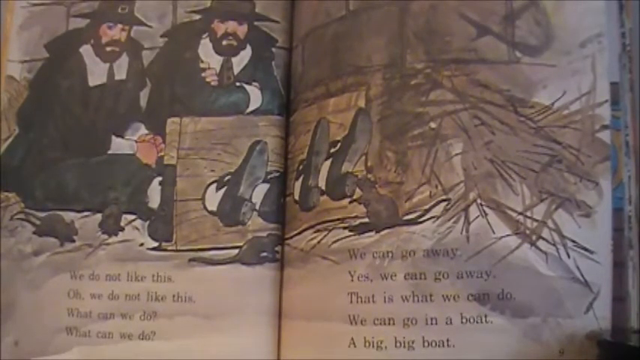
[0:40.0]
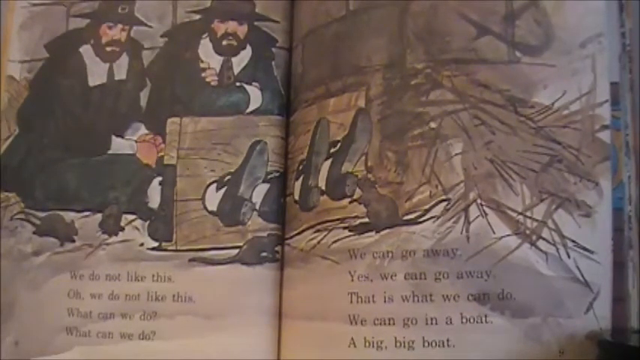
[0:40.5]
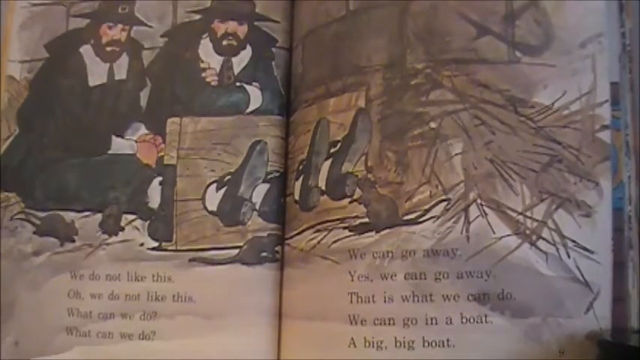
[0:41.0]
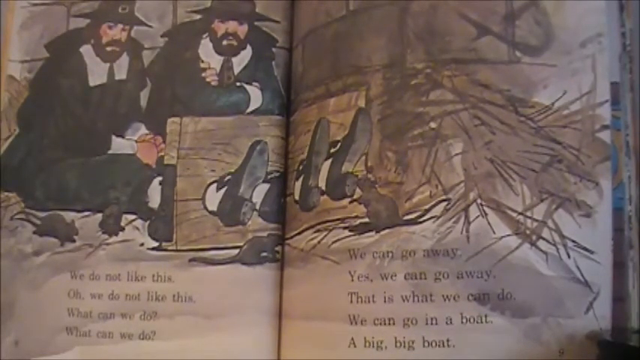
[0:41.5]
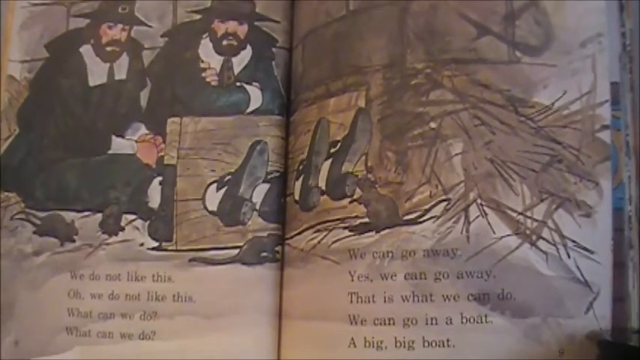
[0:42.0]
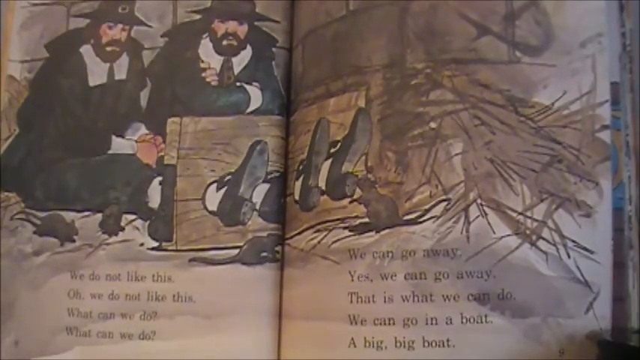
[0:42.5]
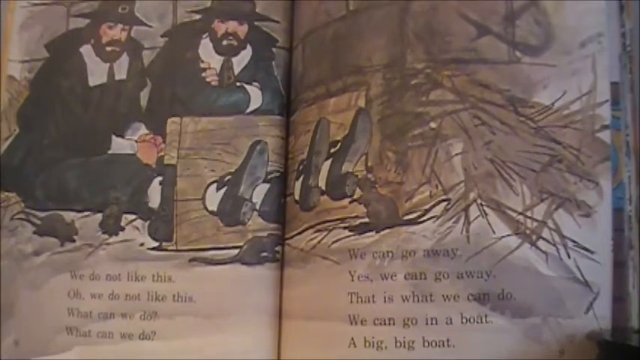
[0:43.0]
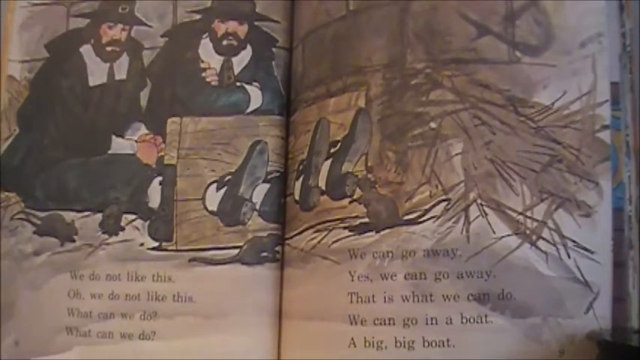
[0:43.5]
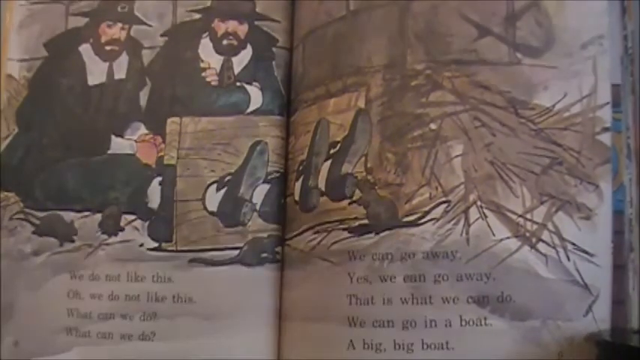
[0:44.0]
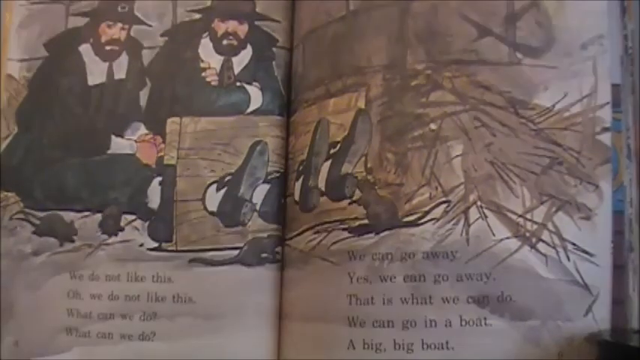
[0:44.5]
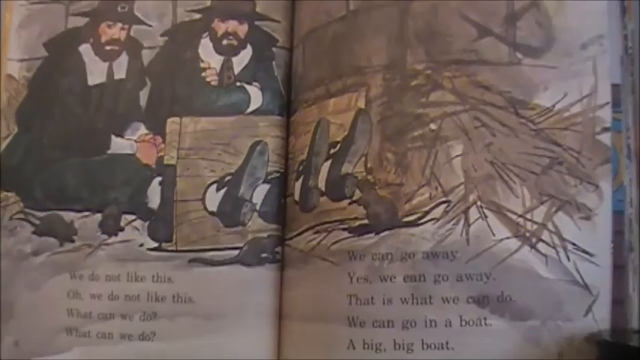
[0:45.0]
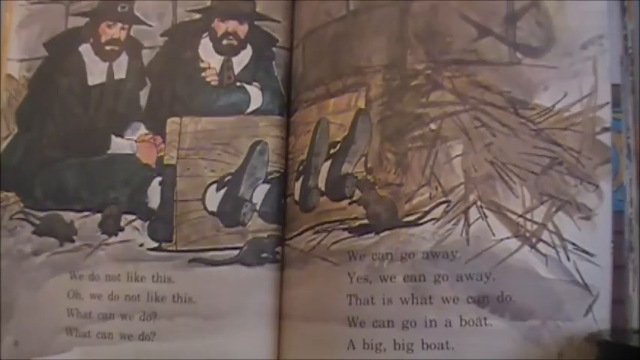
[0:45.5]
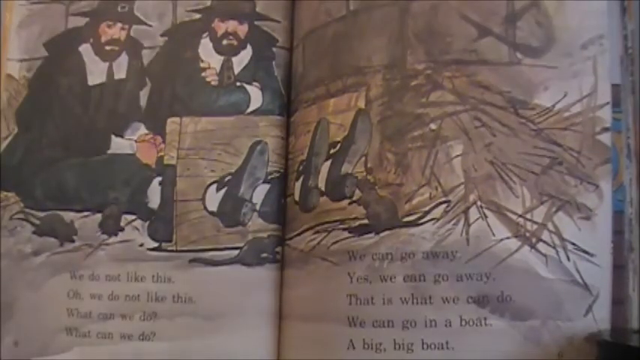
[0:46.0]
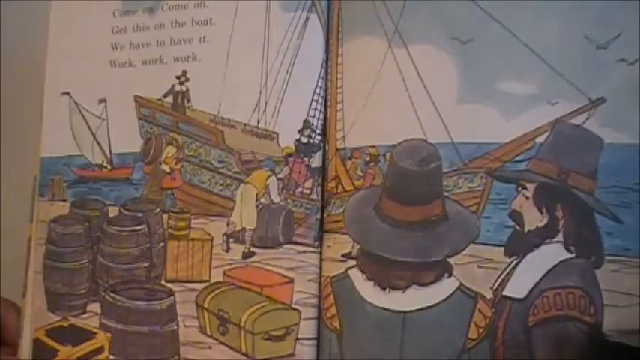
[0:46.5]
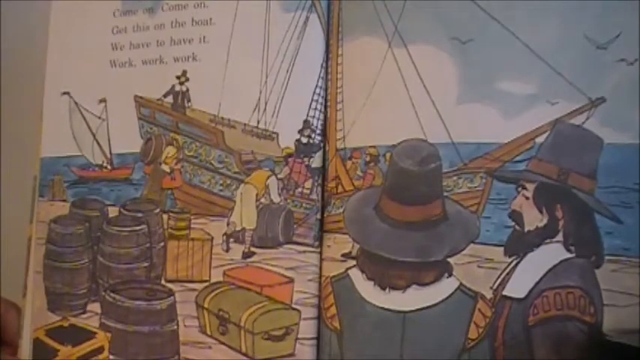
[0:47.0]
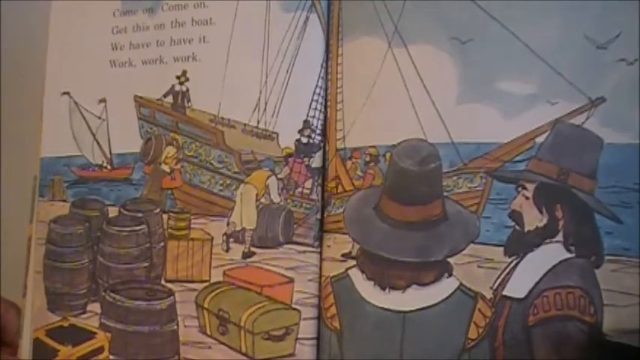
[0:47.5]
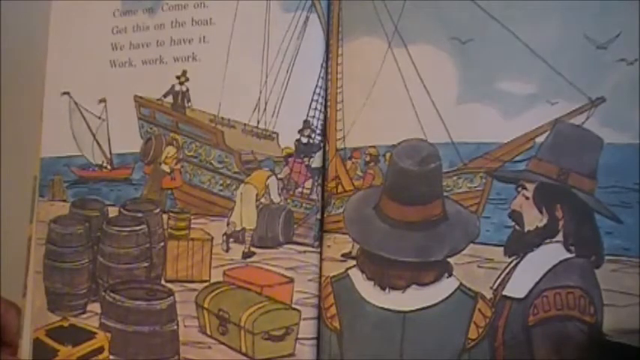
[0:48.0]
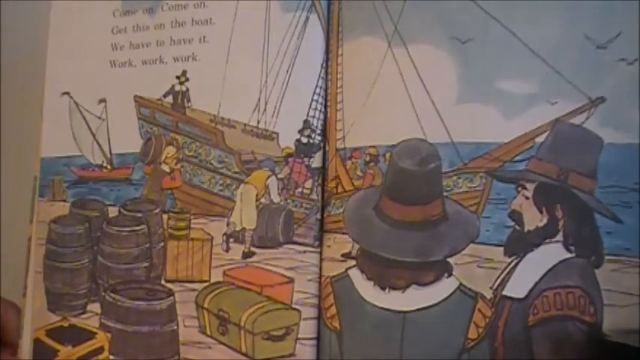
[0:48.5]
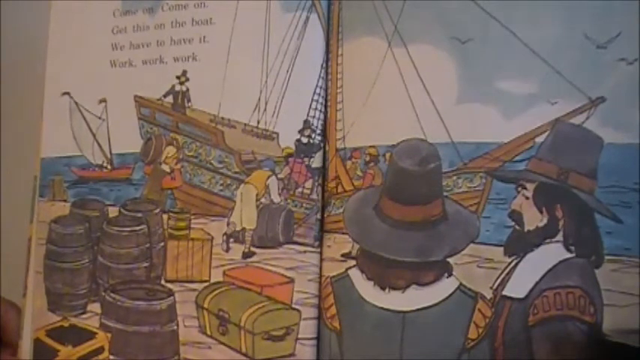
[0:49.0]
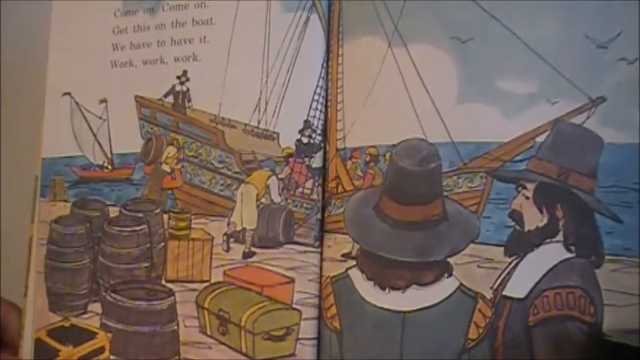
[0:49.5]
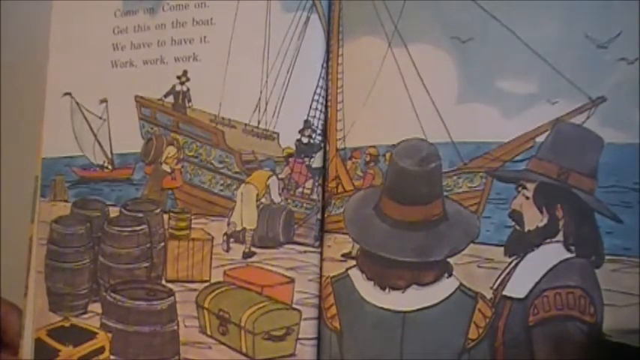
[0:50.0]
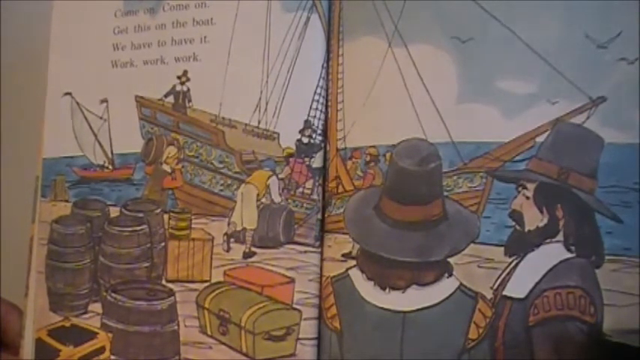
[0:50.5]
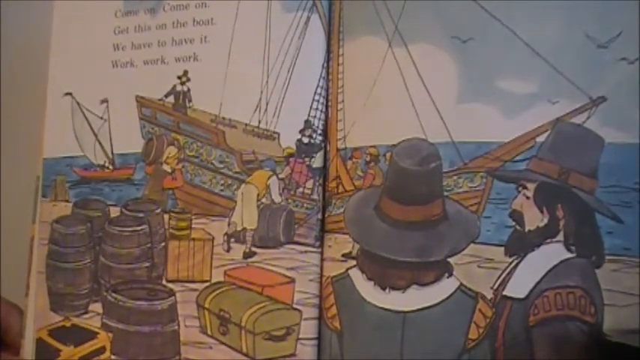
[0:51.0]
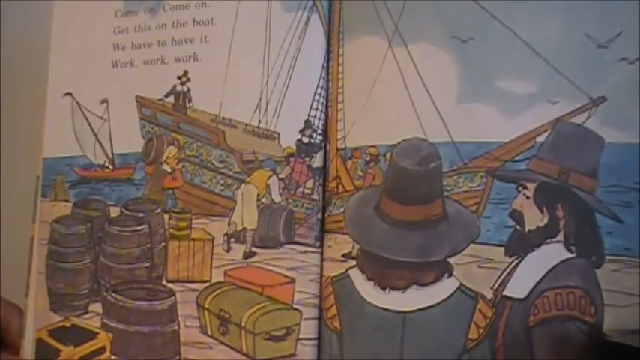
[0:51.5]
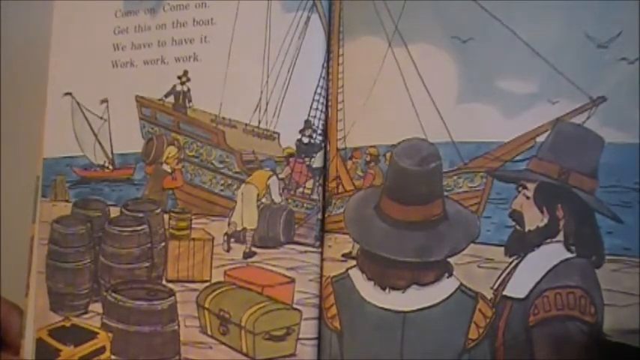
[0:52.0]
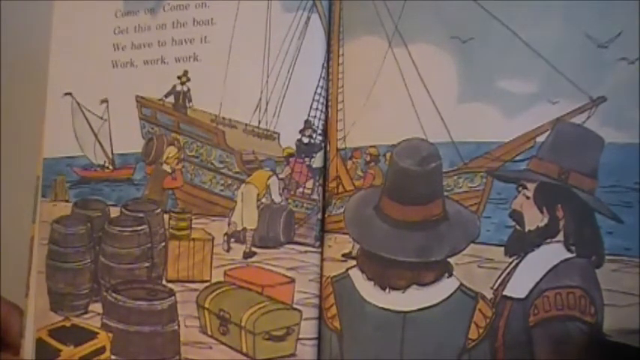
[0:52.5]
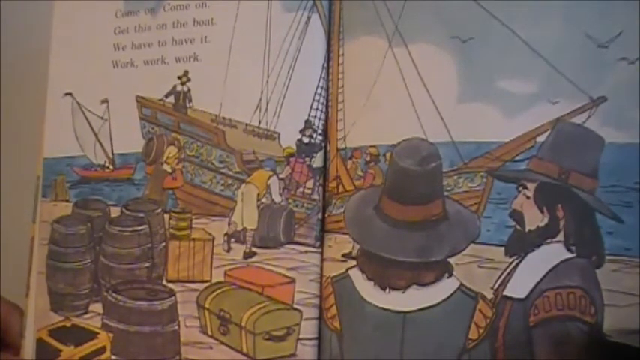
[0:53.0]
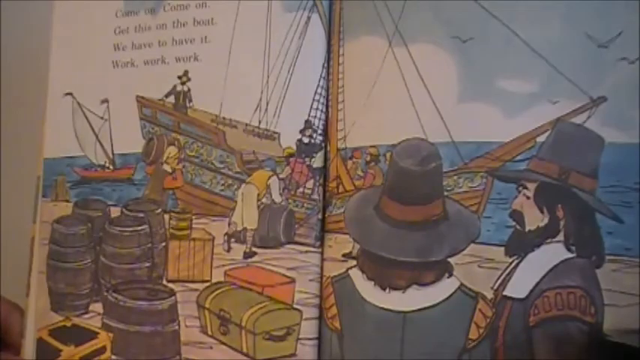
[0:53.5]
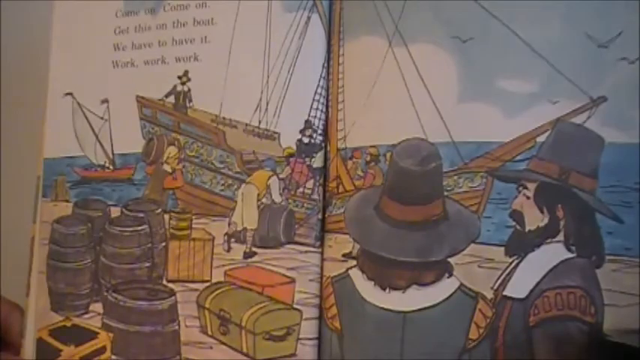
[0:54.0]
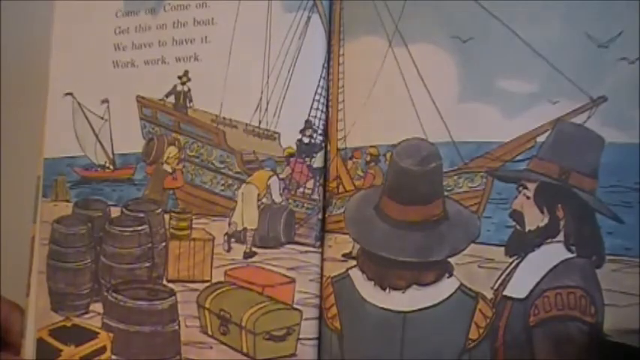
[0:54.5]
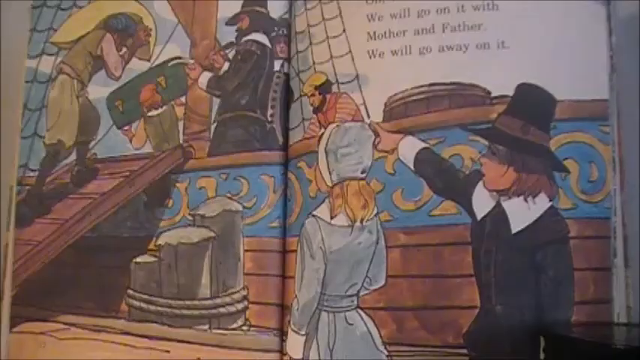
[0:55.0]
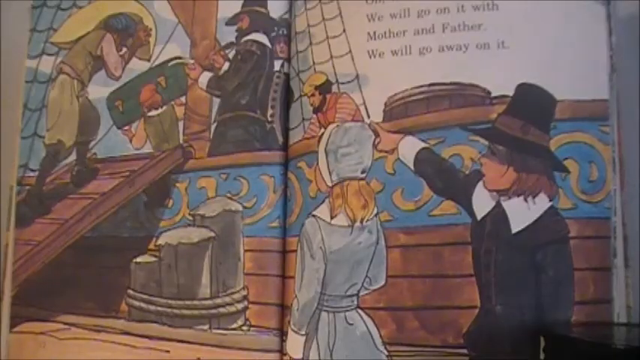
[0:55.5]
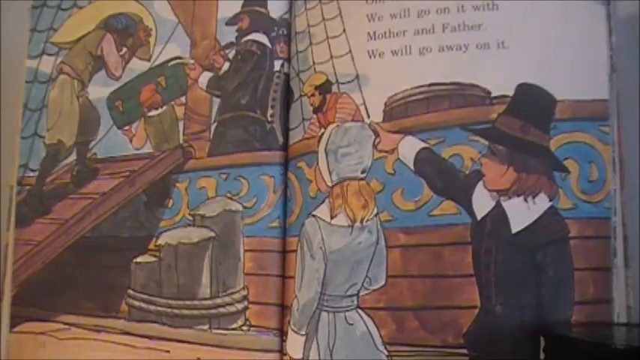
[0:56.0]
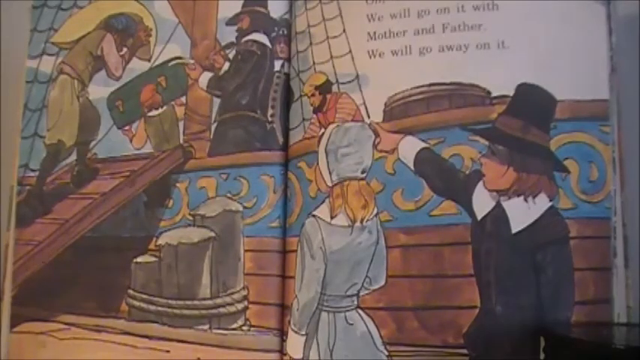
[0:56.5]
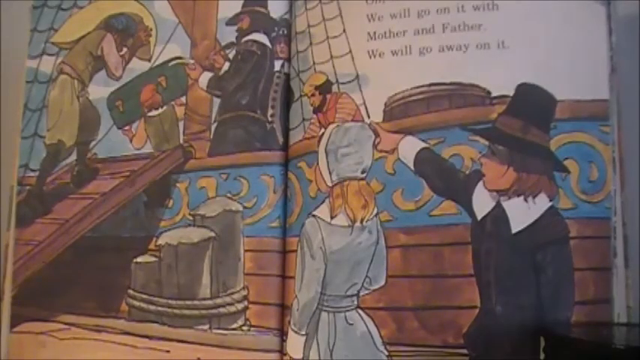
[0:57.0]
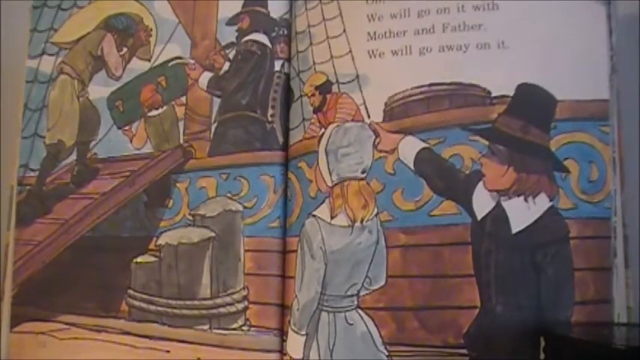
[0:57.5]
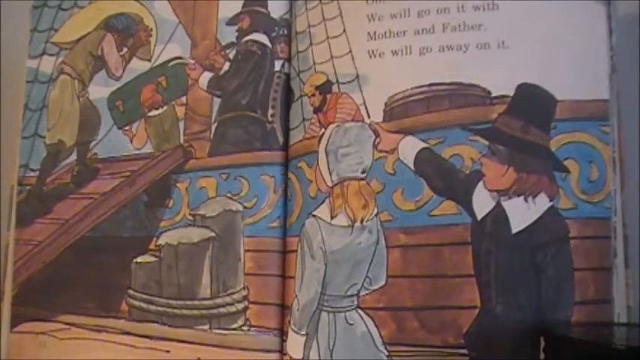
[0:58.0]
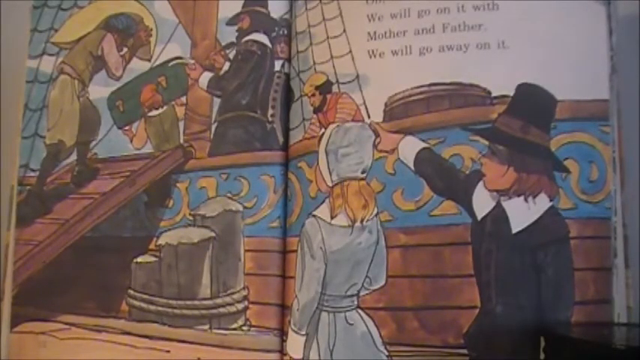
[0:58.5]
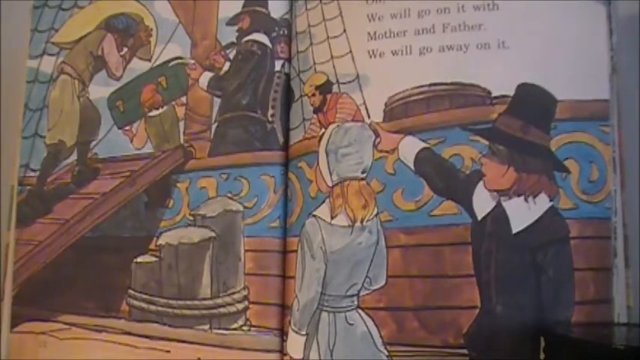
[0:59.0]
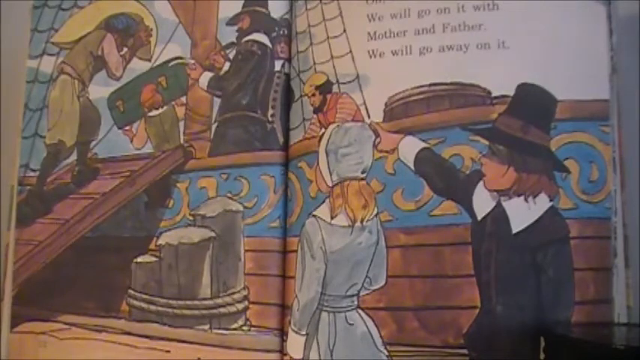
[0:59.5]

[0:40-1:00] The page with the two men in stocks is shown, and then the book moves to an outdoor scene of a ship in harbour. The ship looks like a sailing ship and is quite highly decorated, though its sail has not been set yet. It is at the dock, and many people are loading it: two people carry barrels, there are barrels and trunks on the port side, and in the bottom right corner two men in pilgrim outfits wear hats. The page turns to a close-up of the ship being loaded, showing a man walking up what seems to be the plank carrying a sack. A couple of men in pilgrim outfits seem to be organizing things, and one of them looks like he is writing; further back another man carries a chest. At the bottom right of the page are the two children from the cover, the girl in the blue dress and bonnet and the young boy in the pilgrim outfit. The boy is pointing towards where the loading is taking place.